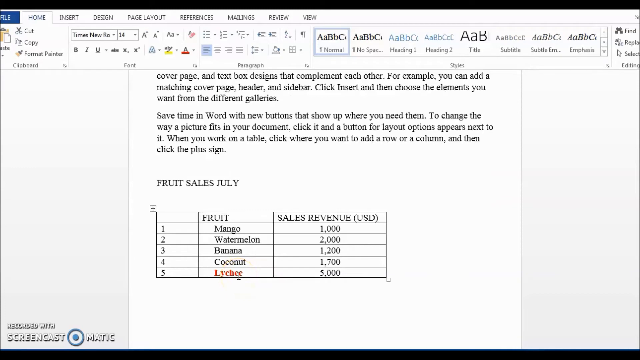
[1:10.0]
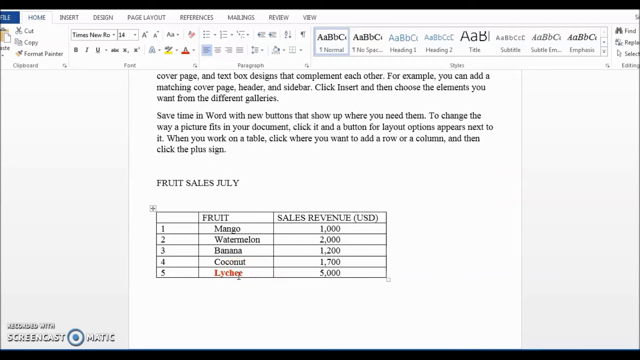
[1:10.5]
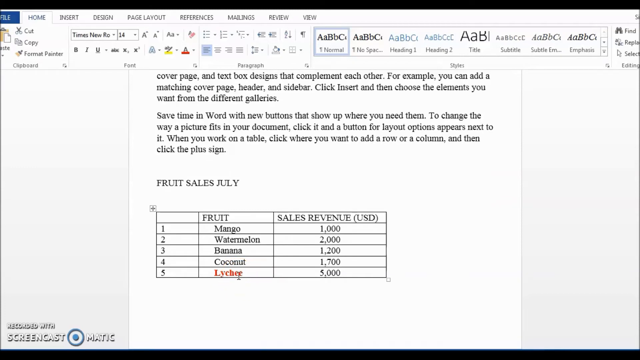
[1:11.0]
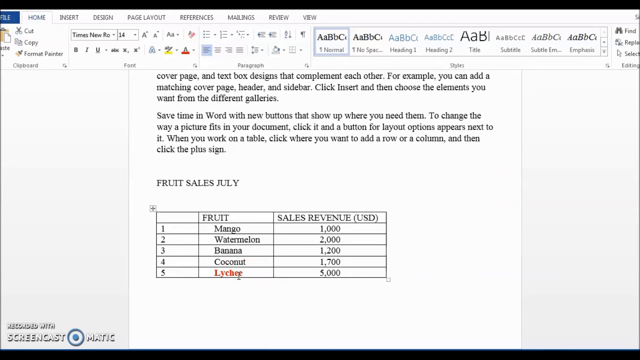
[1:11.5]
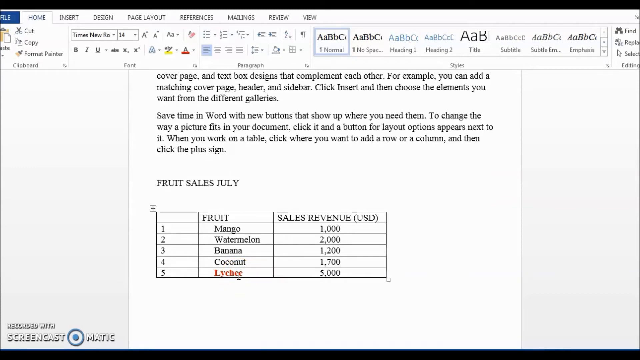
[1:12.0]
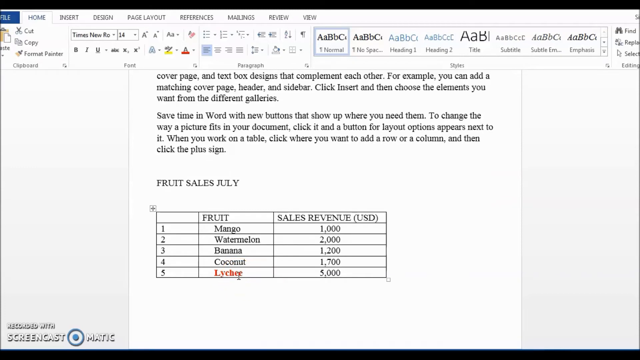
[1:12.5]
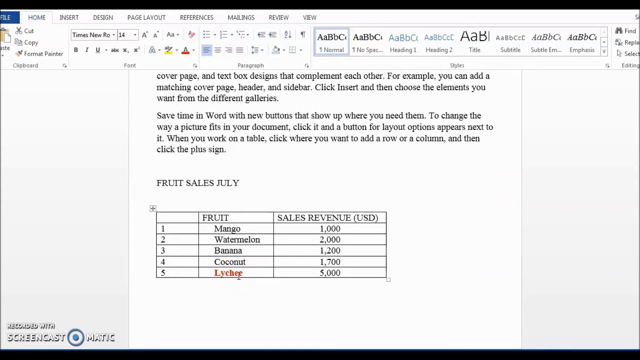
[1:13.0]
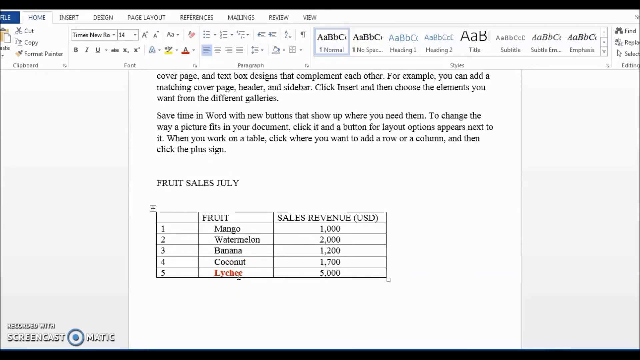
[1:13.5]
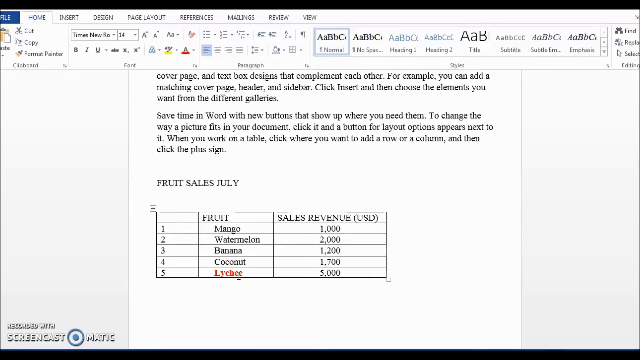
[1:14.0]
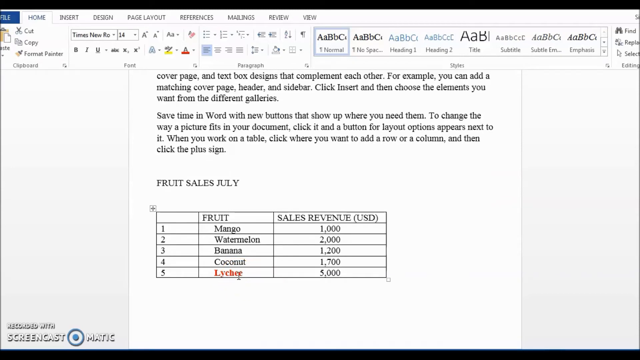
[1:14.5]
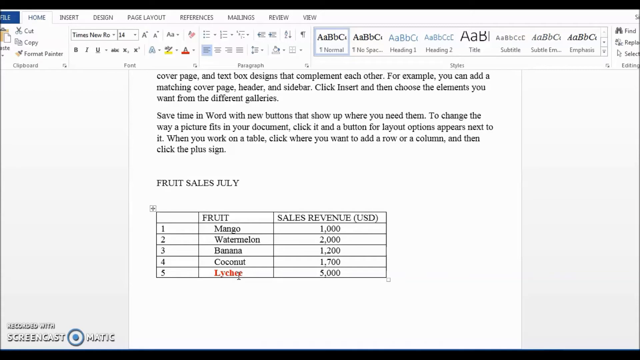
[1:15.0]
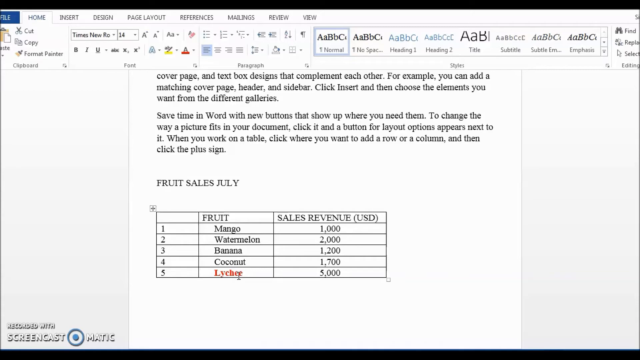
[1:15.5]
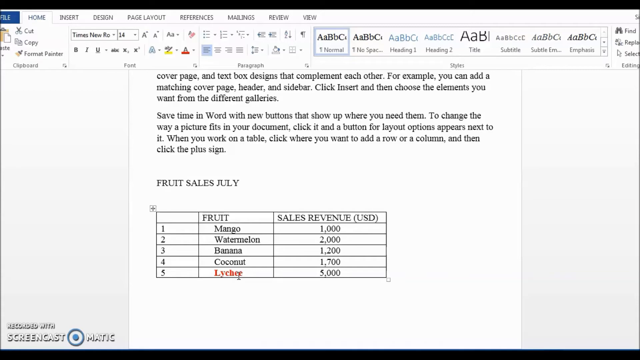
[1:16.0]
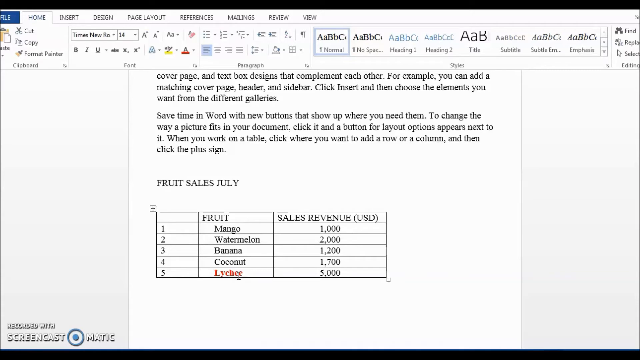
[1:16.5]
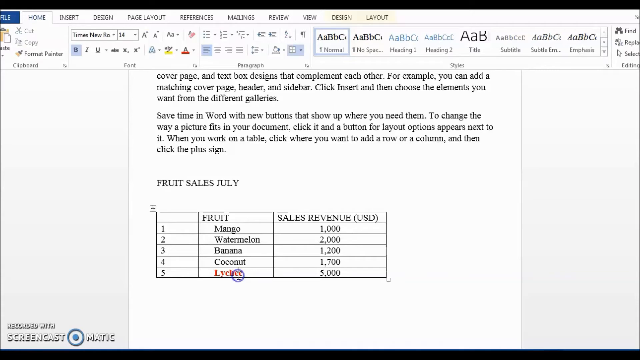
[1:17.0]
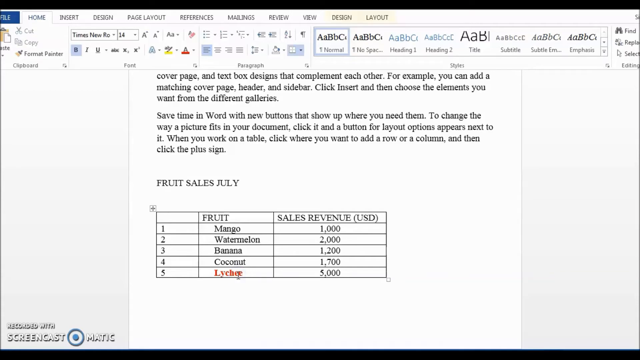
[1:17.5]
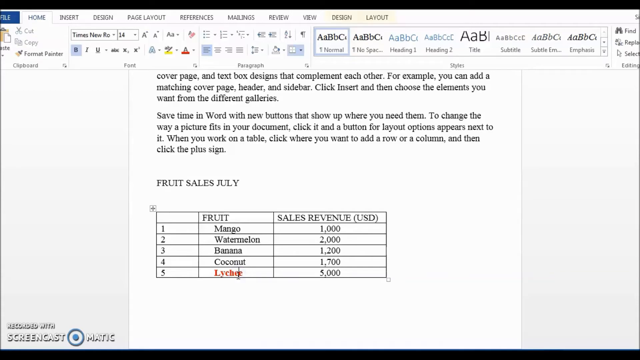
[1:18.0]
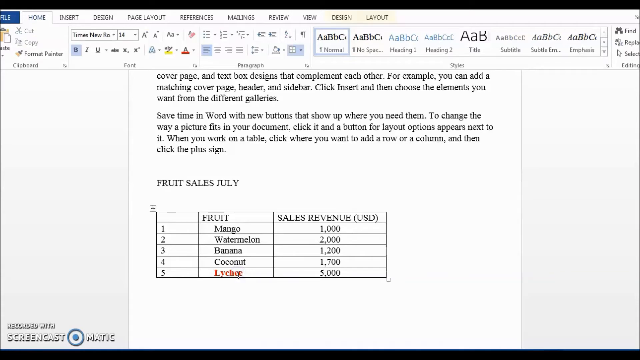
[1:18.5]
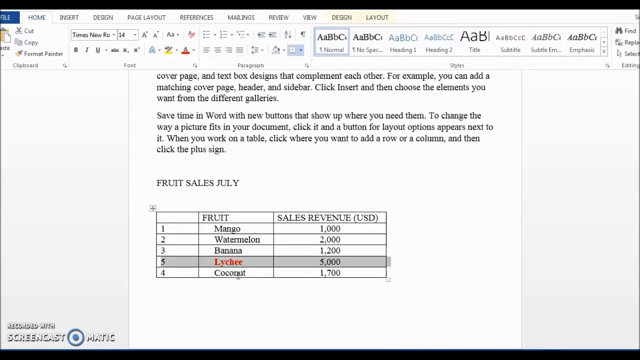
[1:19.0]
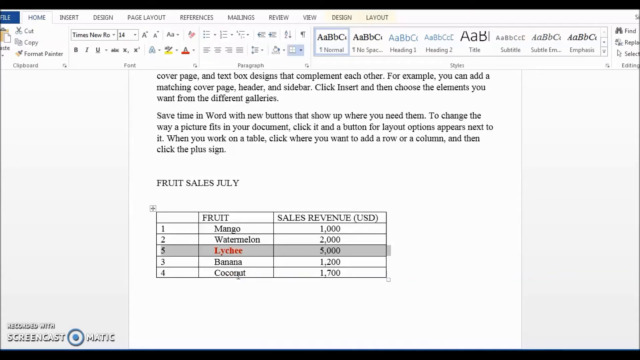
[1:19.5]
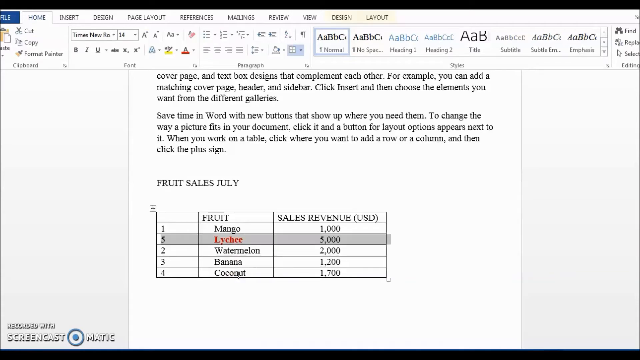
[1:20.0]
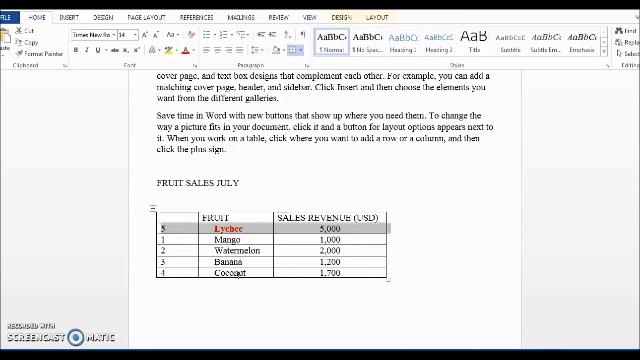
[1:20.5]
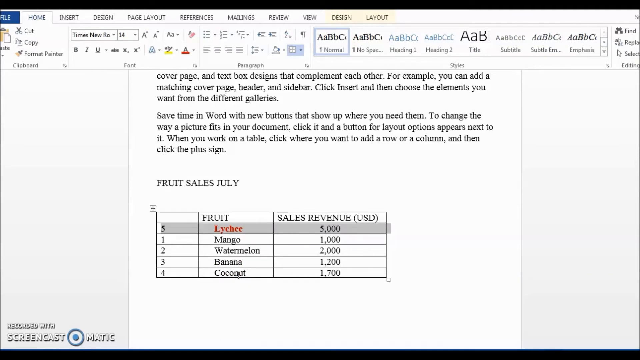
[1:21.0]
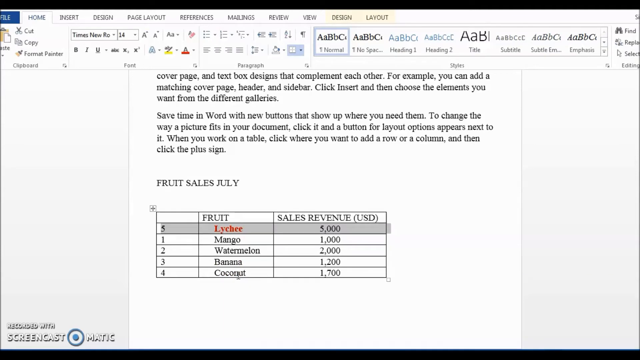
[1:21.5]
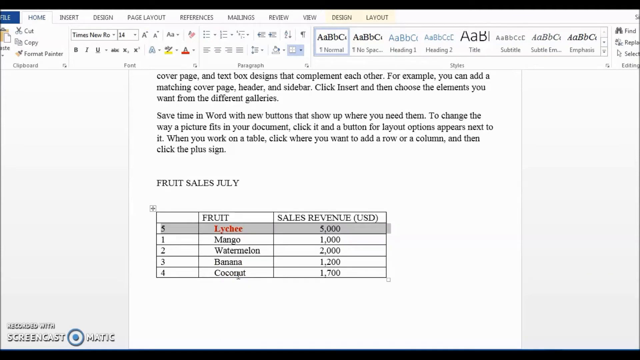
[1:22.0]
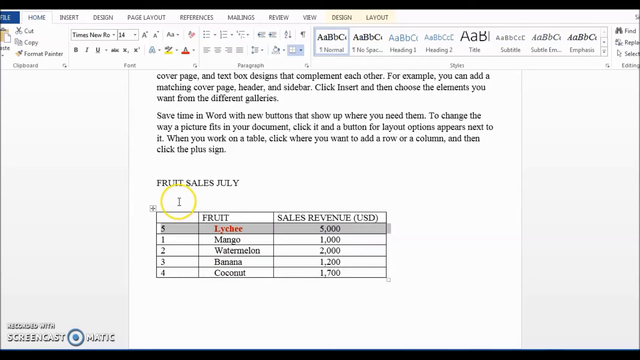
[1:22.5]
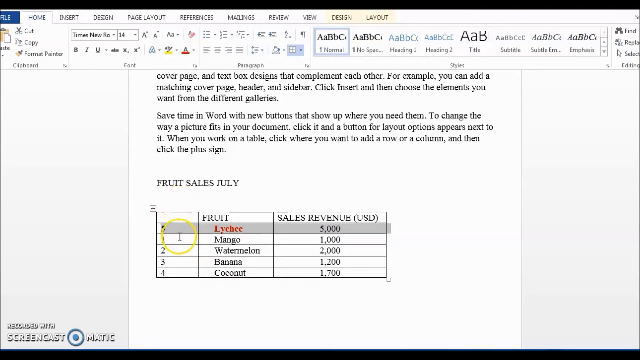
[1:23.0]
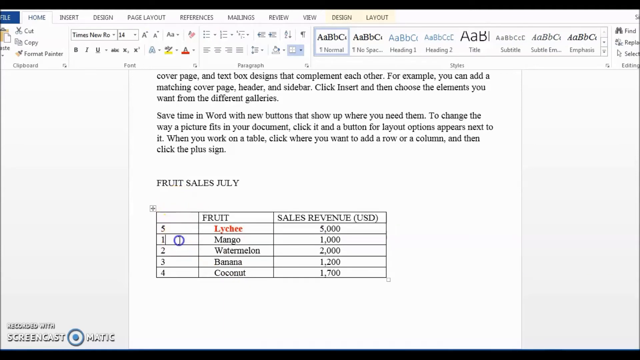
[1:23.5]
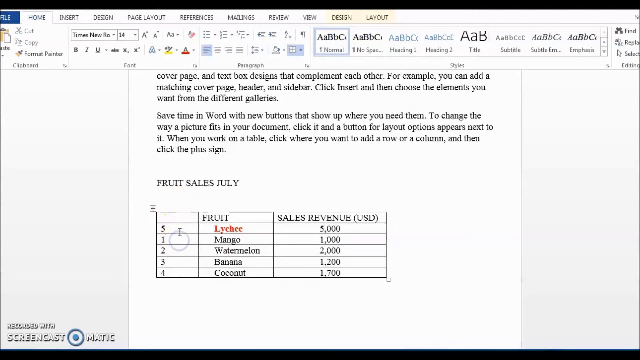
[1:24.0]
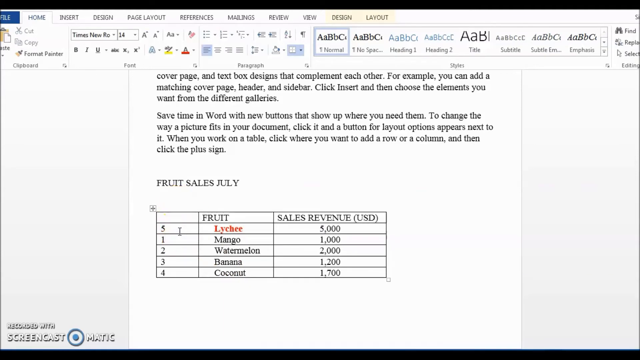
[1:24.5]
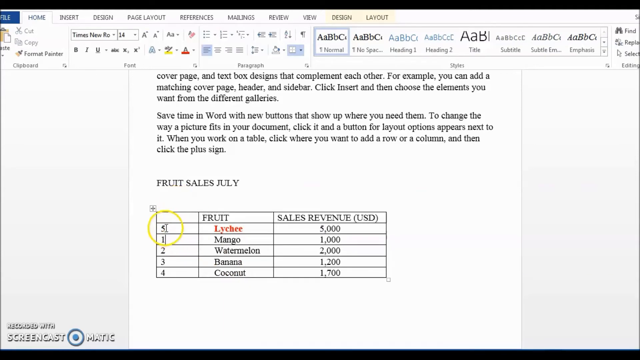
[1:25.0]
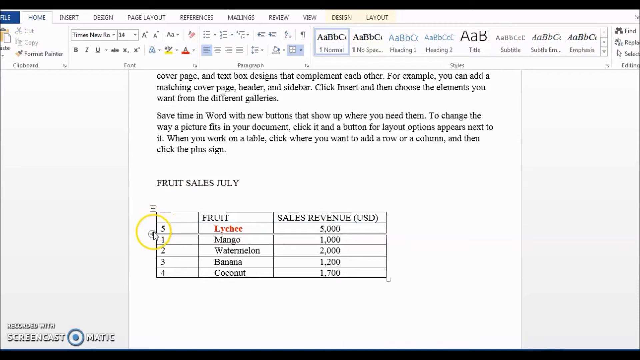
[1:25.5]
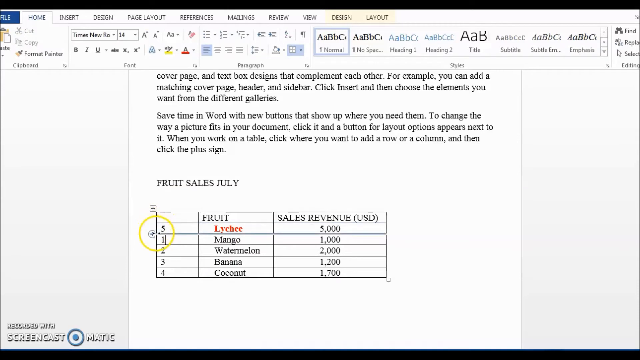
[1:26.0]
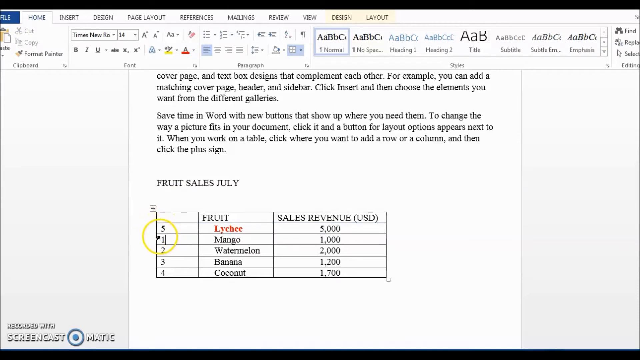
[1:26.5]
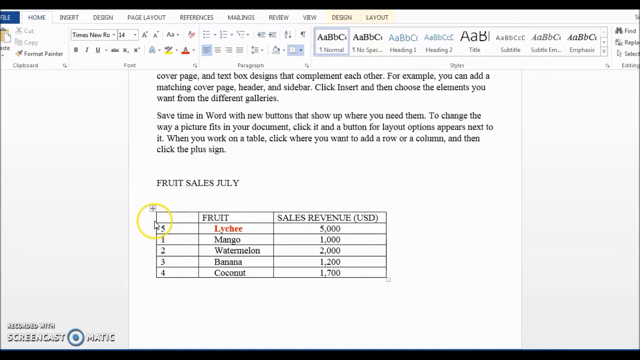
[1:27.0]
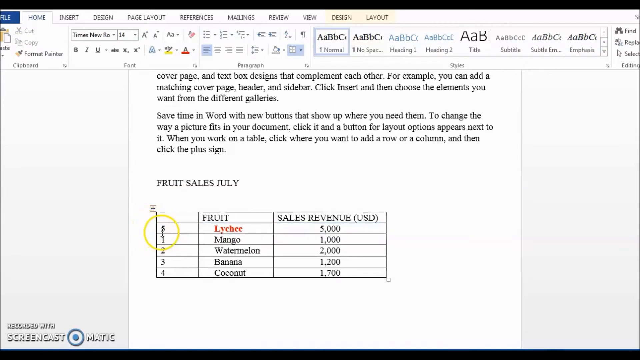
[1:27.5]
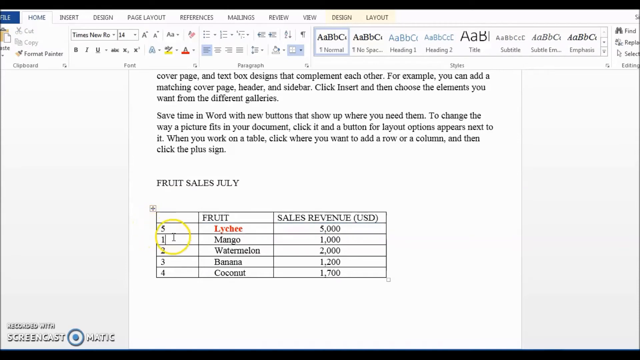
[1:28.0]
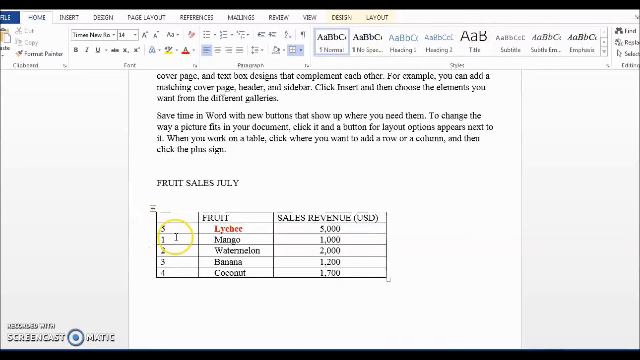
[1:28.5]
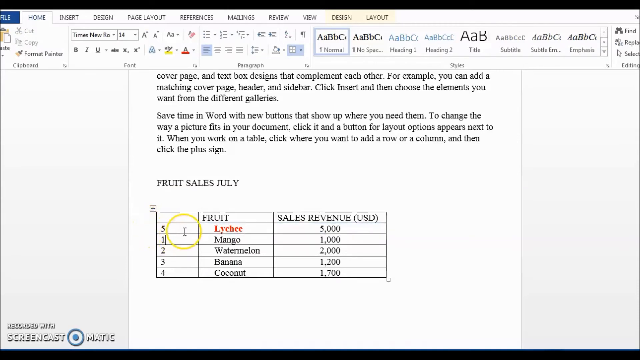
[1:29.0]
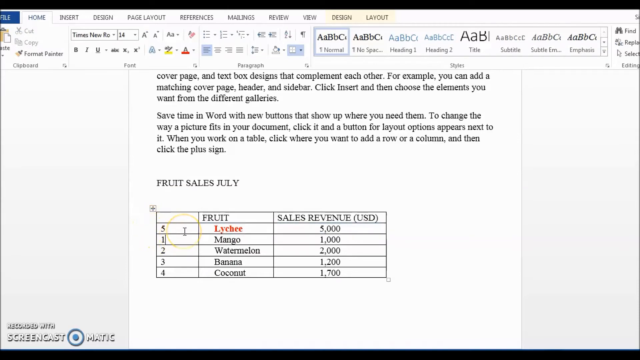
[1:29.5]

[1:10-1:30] The video is about editing a Word document; the person presenting it is basically showing how to do a regular cut and paste or copy and paste. The version of Word looks like it might be relatively recent, although the radio buttons of more current Word versions do not show up on the screen.